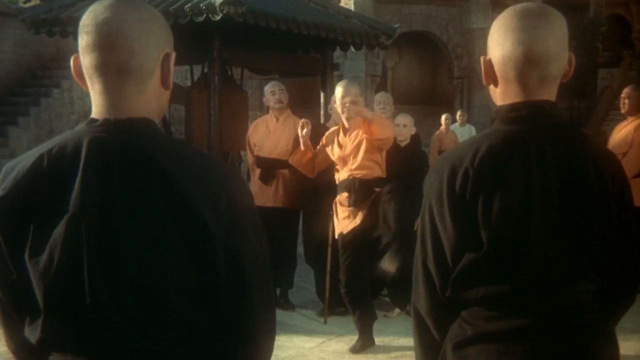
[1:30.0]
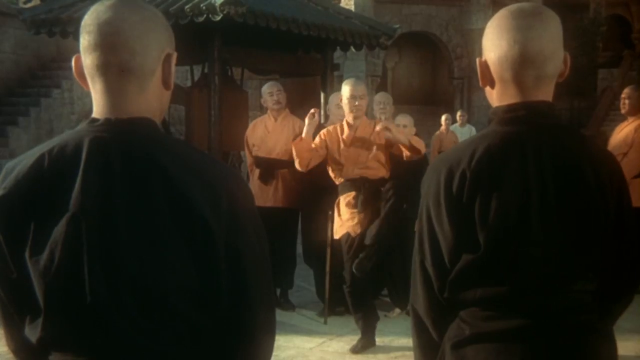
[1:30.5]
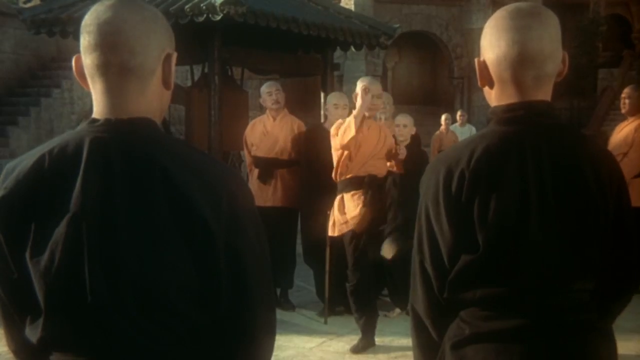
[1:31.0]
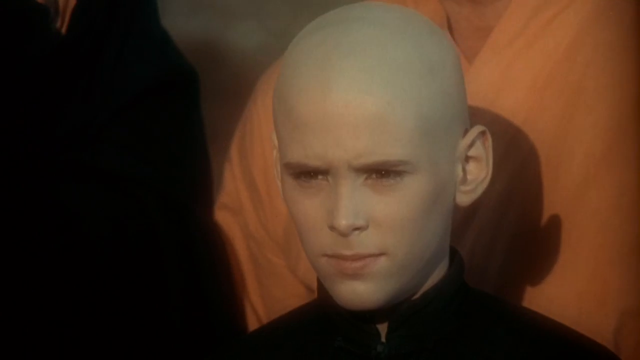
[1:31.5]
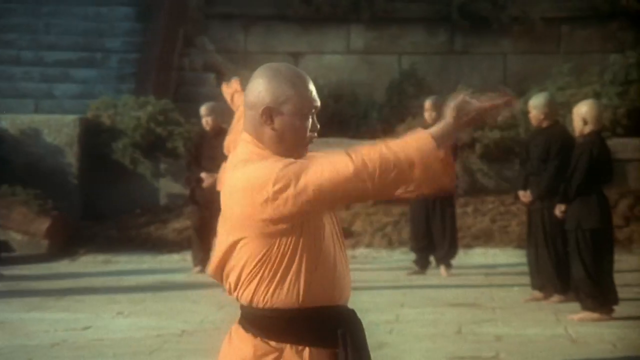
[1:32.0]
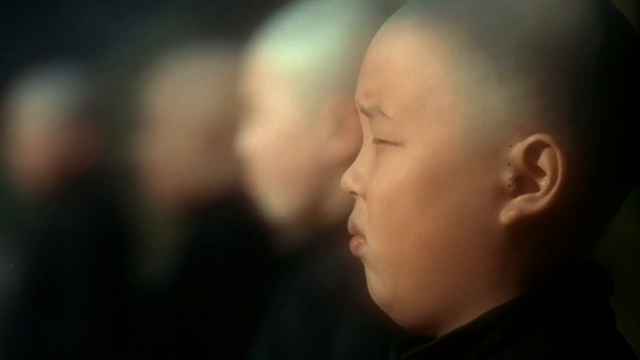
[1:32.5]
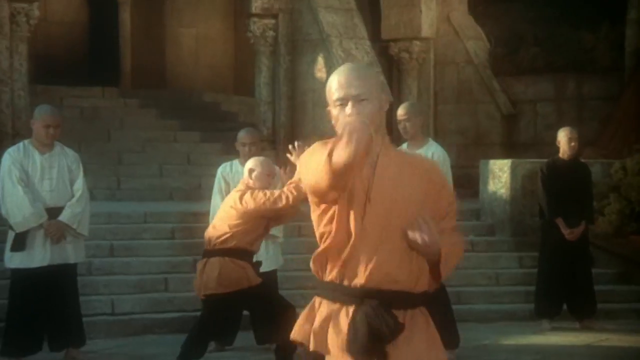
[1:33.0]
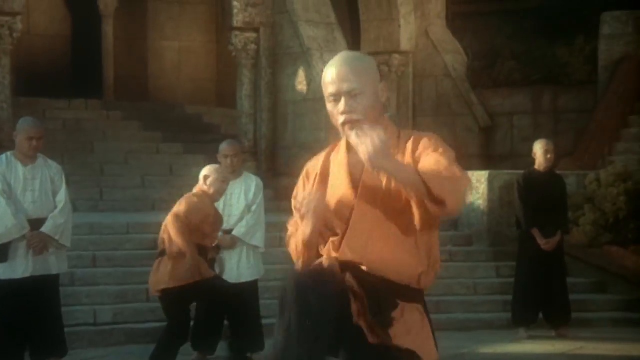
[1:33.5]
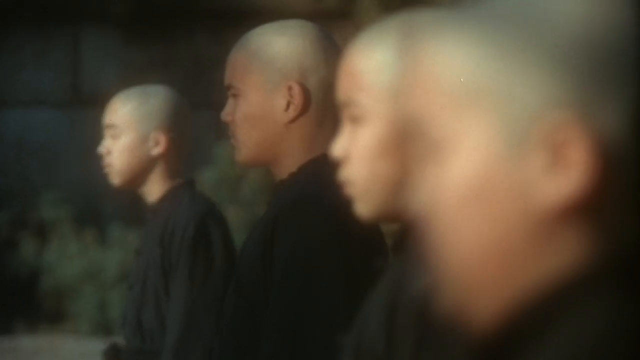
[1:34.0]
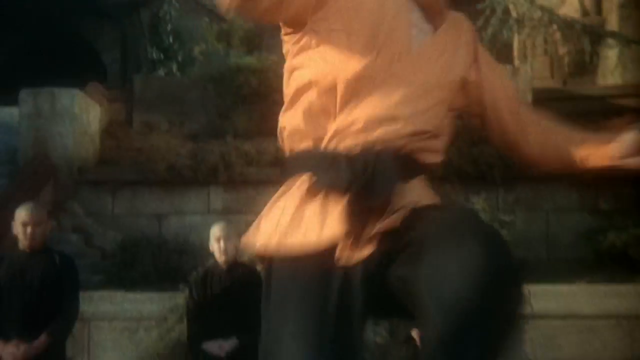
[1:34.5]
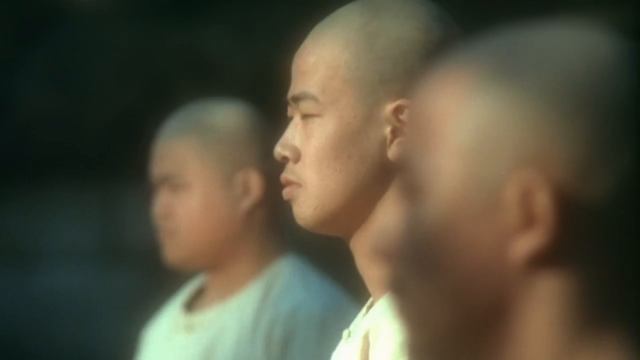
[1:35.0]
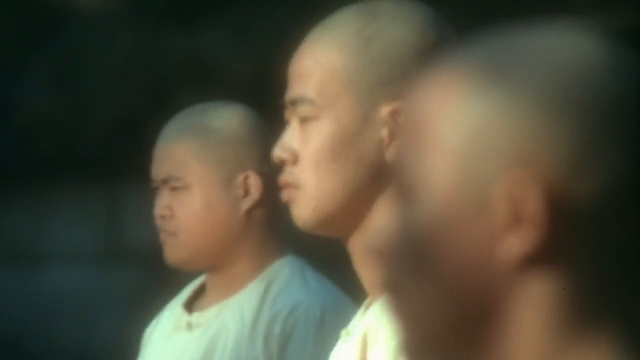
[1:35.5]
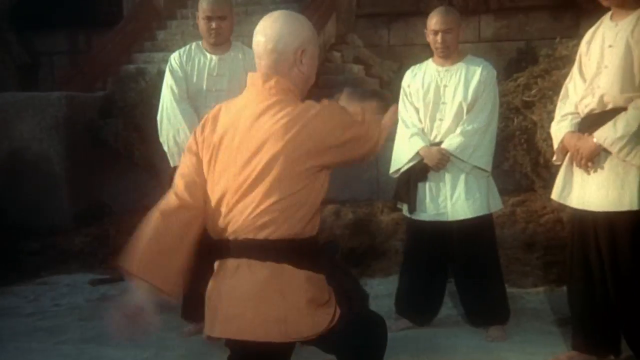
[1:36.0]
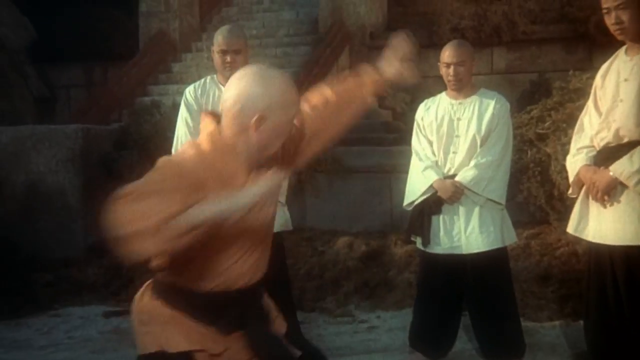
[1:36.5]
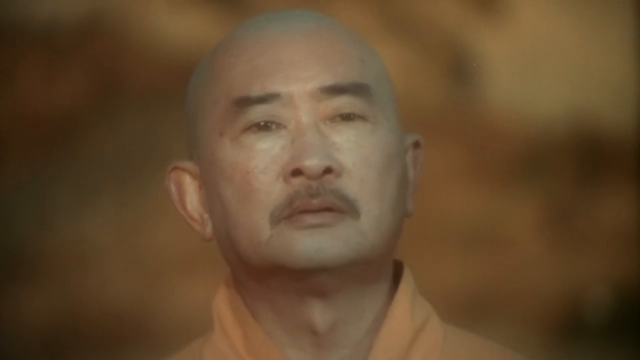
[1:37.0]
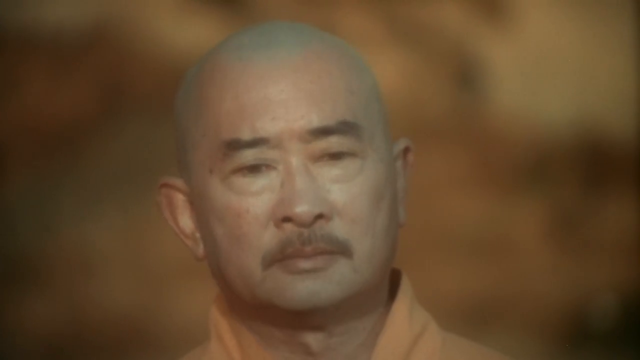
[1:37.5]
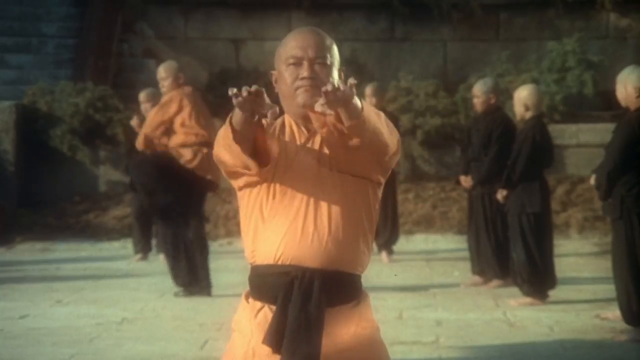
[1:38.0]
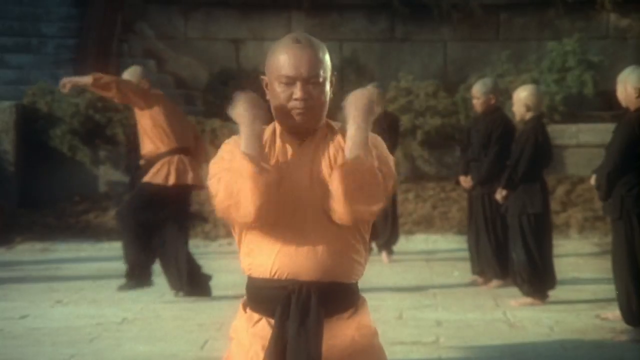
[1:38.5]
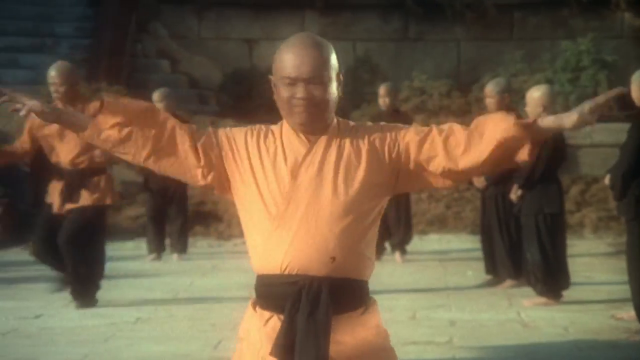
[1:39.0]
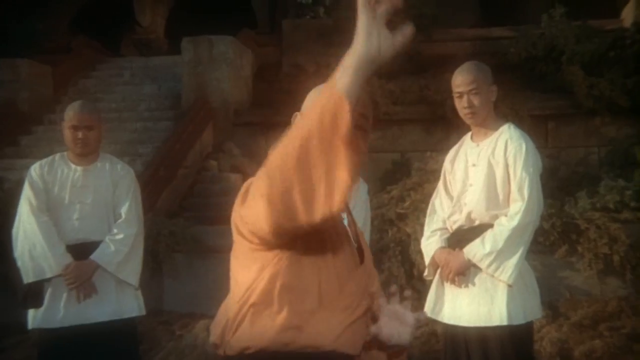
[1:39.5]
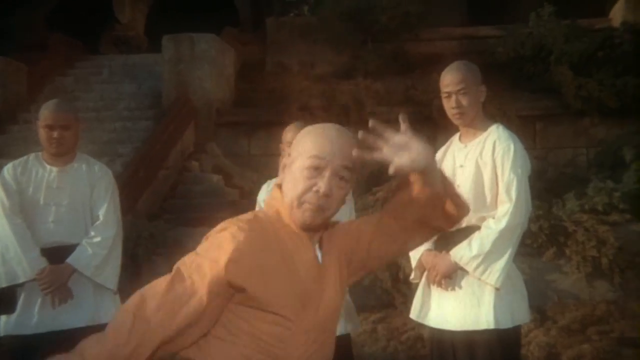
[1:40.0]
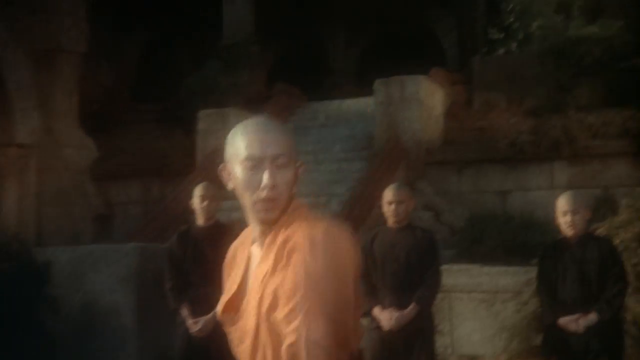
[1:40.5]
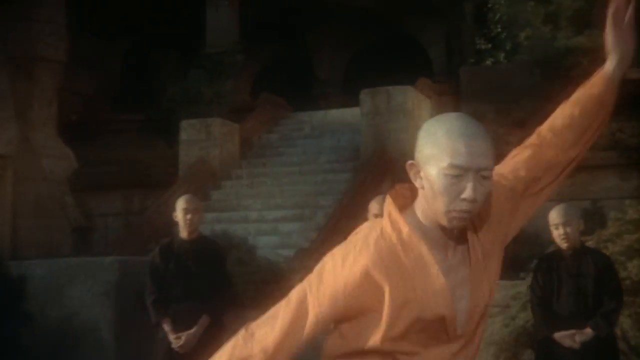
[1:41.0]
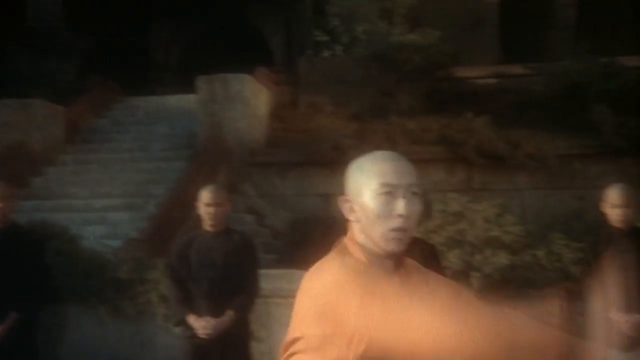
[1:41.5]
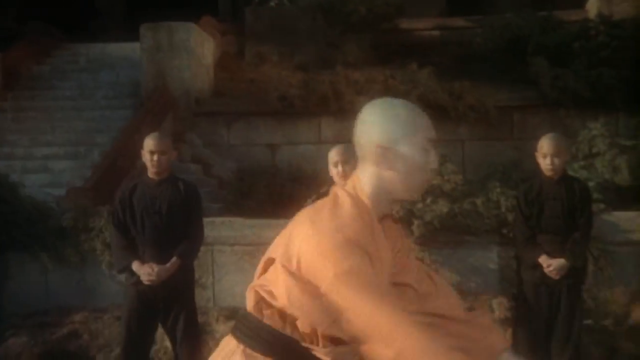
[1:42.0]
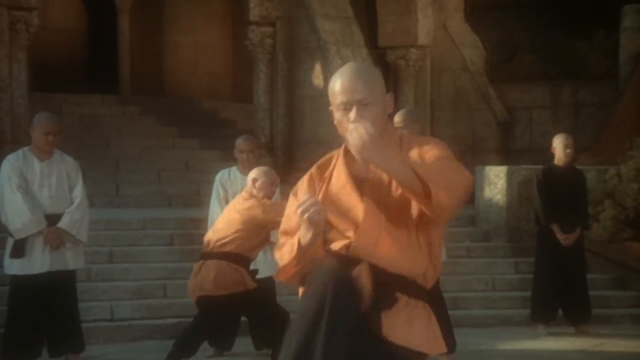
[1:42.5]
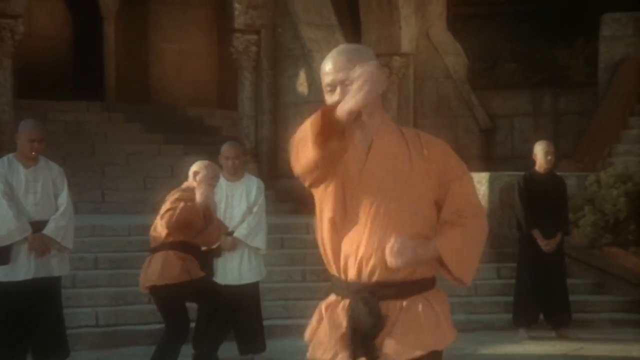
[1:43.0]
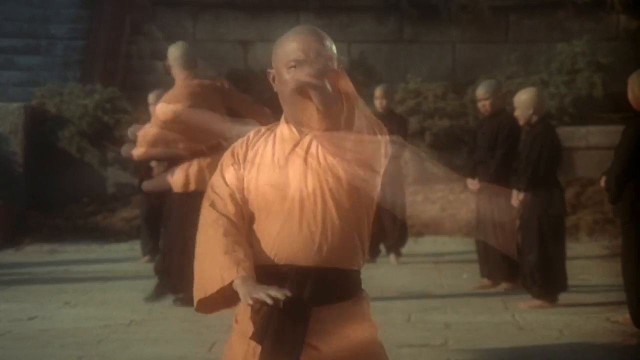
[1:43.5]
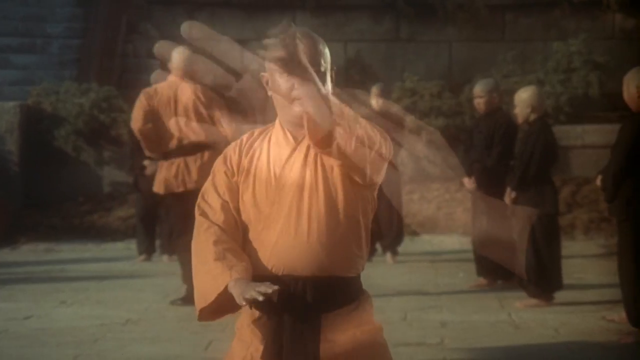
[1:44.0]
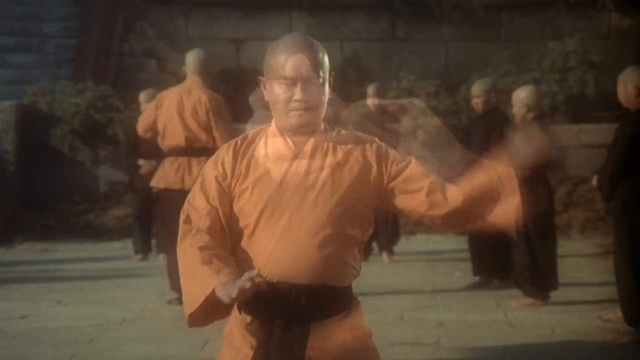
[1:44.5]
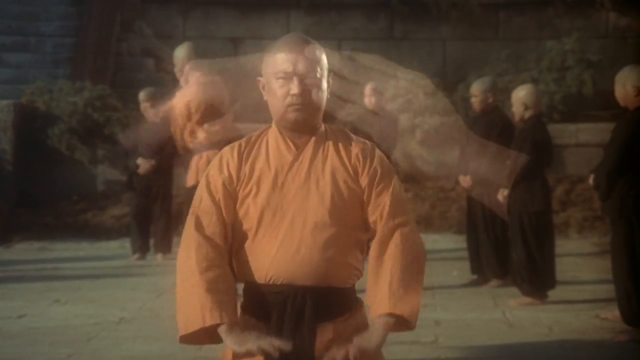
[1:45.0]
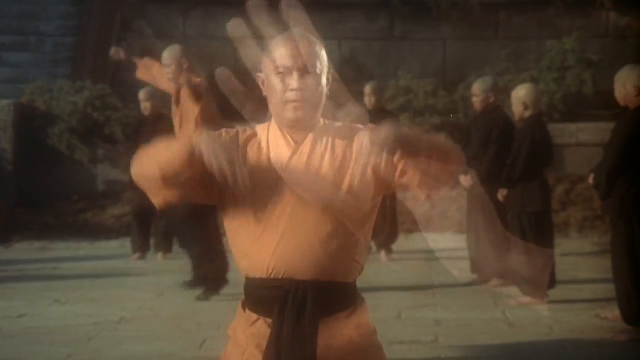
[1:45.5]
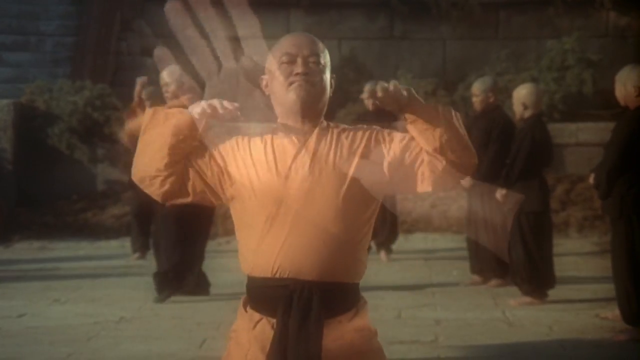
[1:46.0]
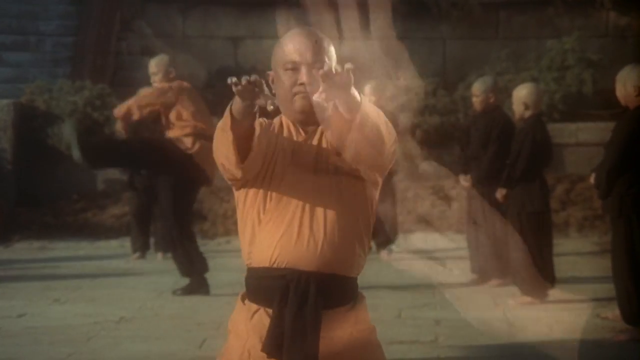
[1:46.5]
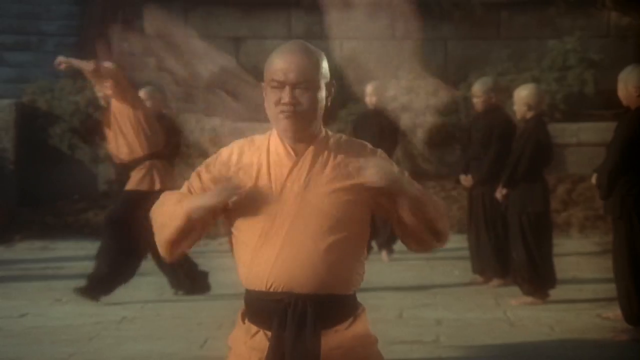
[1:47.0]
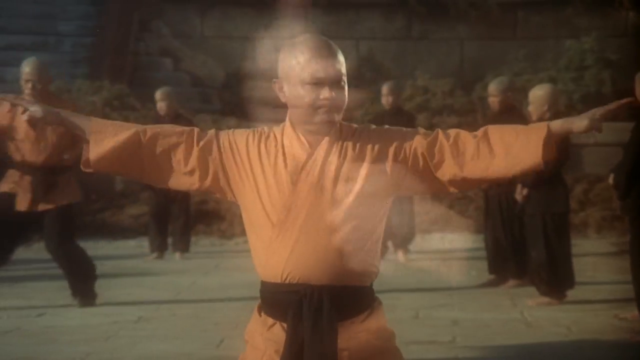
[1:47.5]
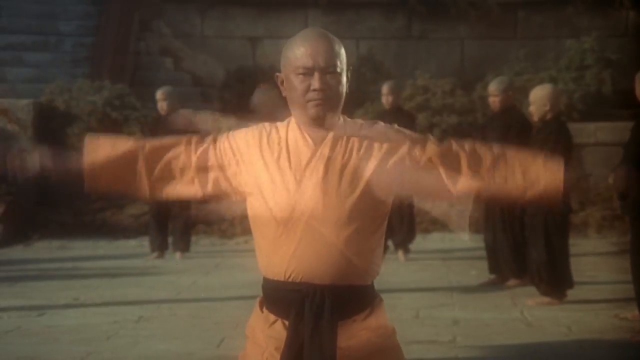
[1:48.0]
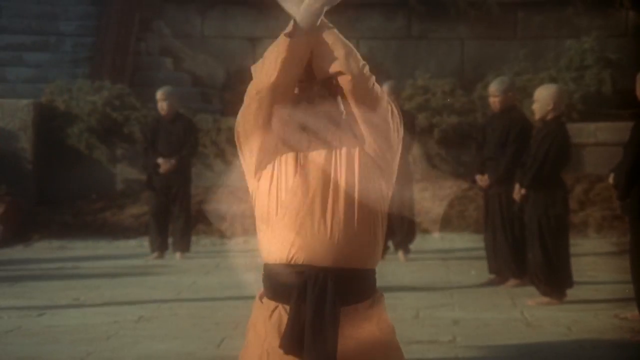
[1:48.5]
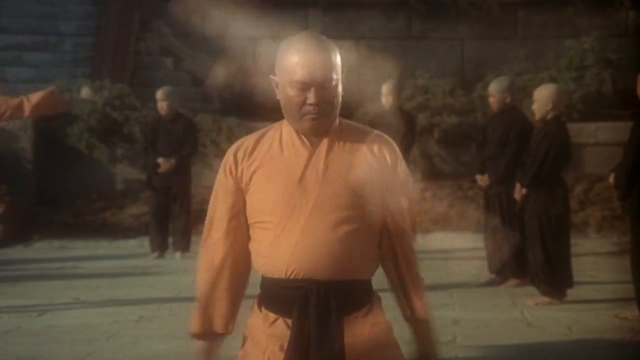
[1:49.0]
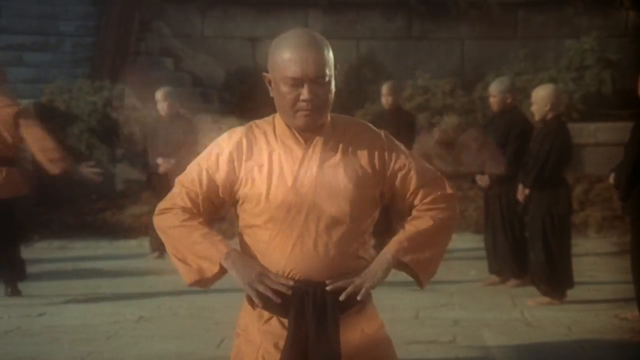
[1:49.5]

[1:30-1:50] Shaolin monks practice their moves and show them to the younger generation, who pay close attention, watching their every move. Others, probably teachers or staff, watch from the sidelines together with the young ones. All their heads are cleanly shaven, with not a single hair. An elderly monk watches the others as they practice. In the background, monks kick in the air and use their hands in peculiar movements that imitate animals, moving their hands at their sides and showing might in the air; it looks like a dance, but the movements exercise their bodies and muscles. Afterward, the monk seen at the start of the video appears with transparent hands over him, showing the training the other monks are doing at the same time.